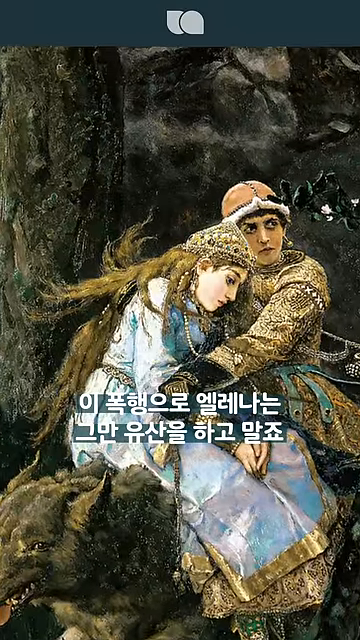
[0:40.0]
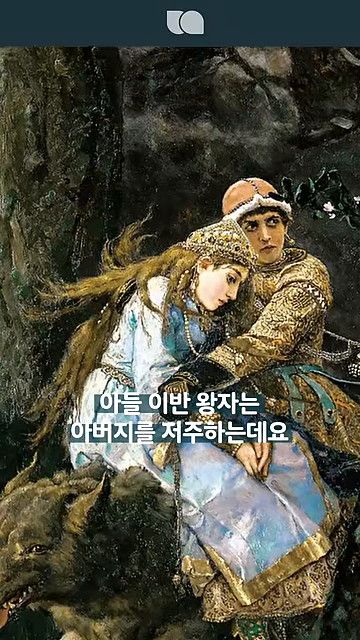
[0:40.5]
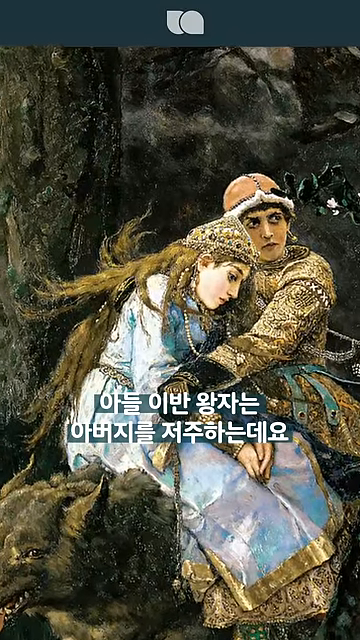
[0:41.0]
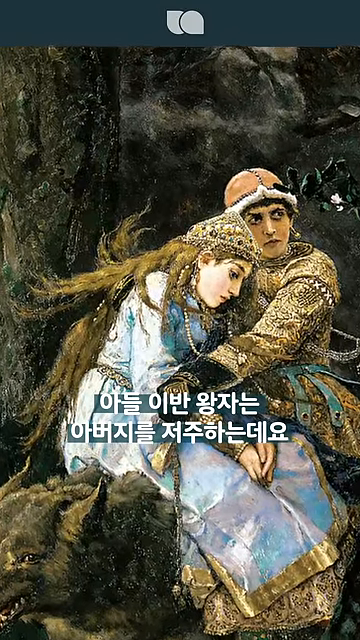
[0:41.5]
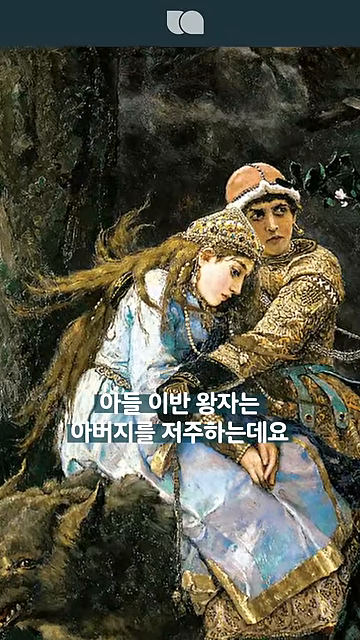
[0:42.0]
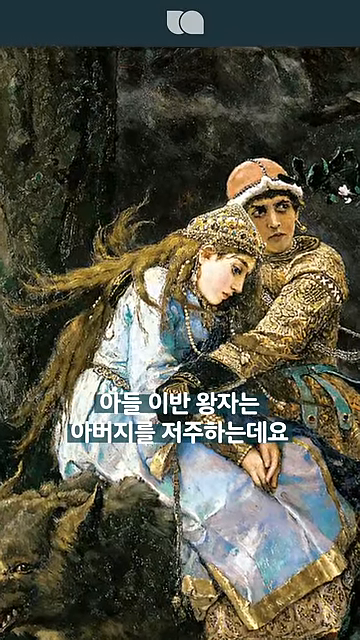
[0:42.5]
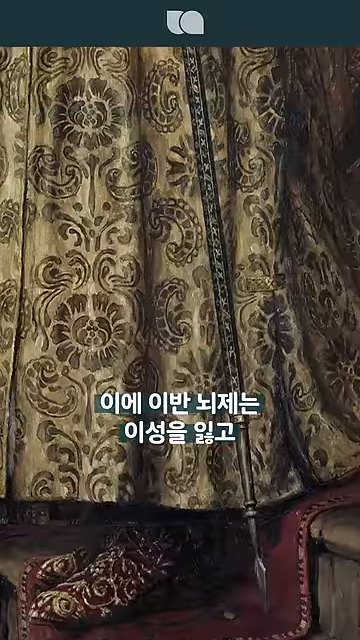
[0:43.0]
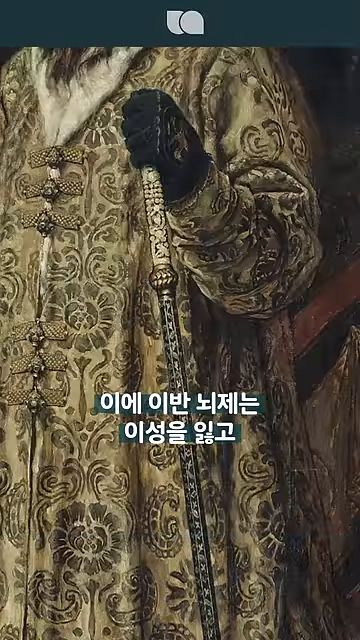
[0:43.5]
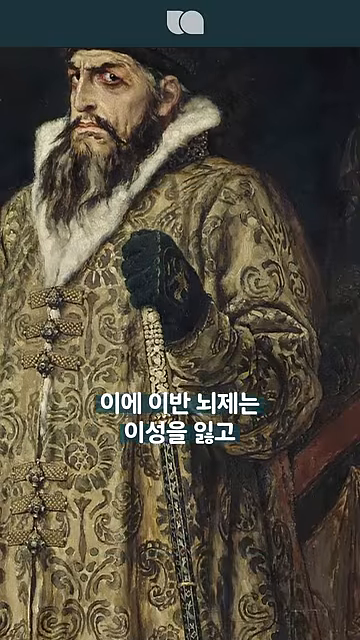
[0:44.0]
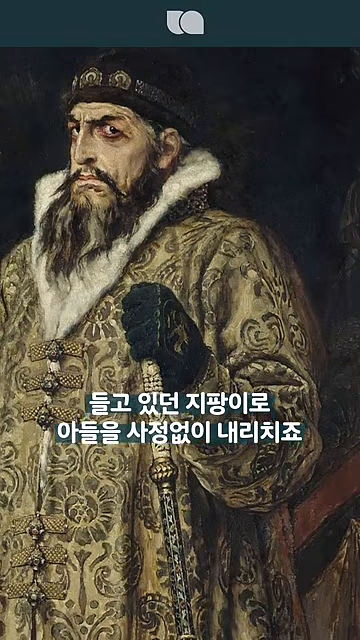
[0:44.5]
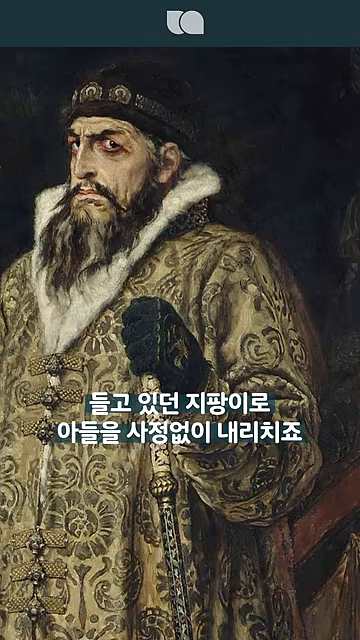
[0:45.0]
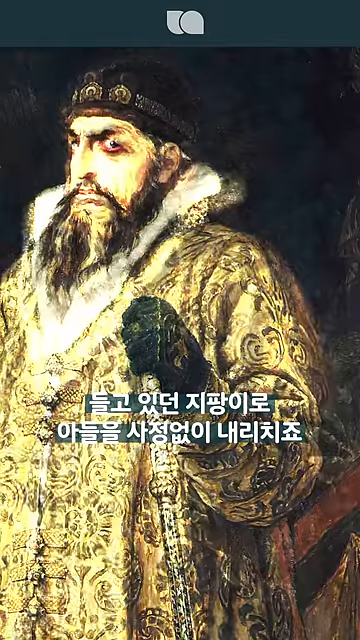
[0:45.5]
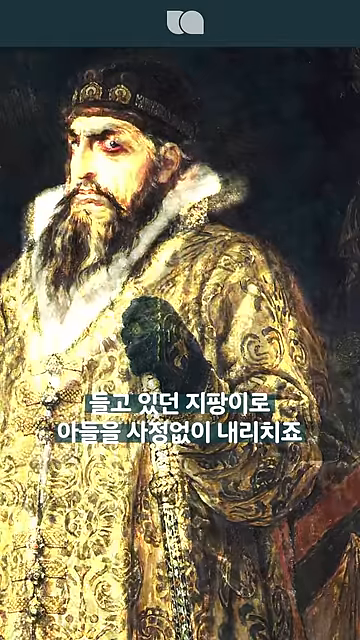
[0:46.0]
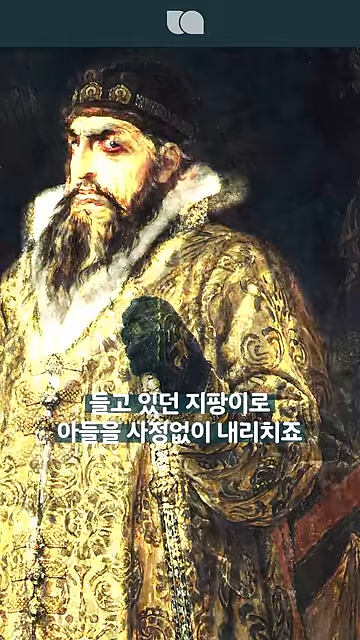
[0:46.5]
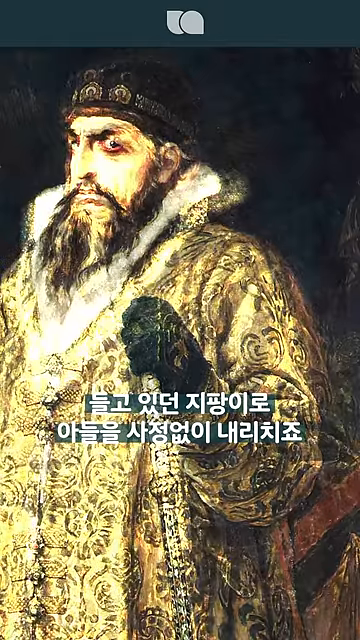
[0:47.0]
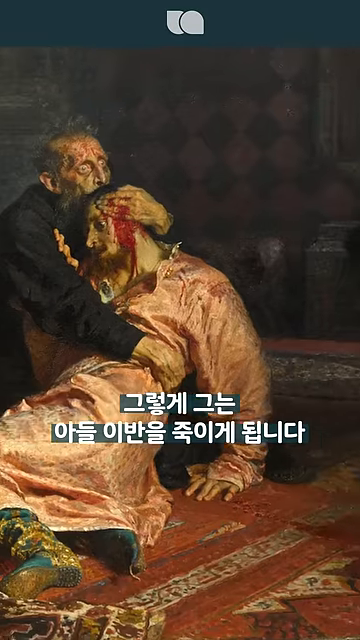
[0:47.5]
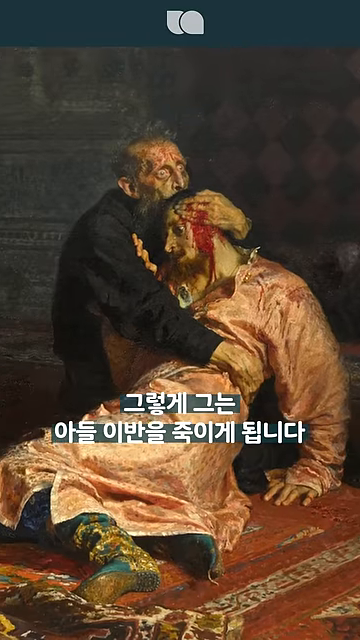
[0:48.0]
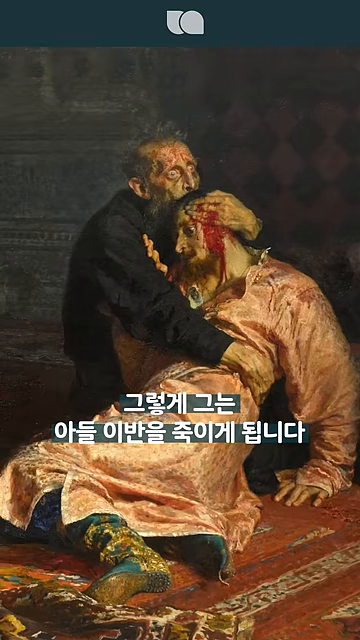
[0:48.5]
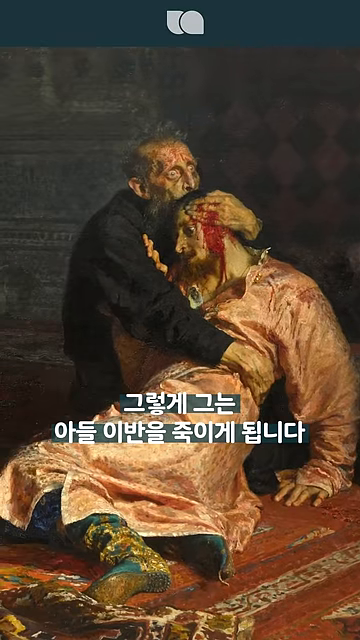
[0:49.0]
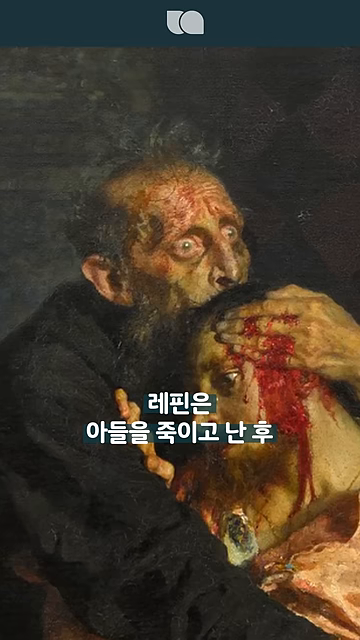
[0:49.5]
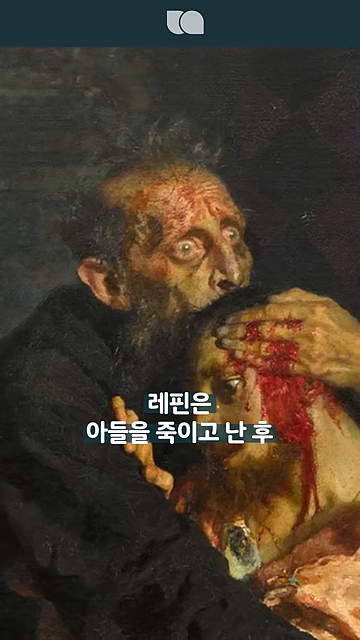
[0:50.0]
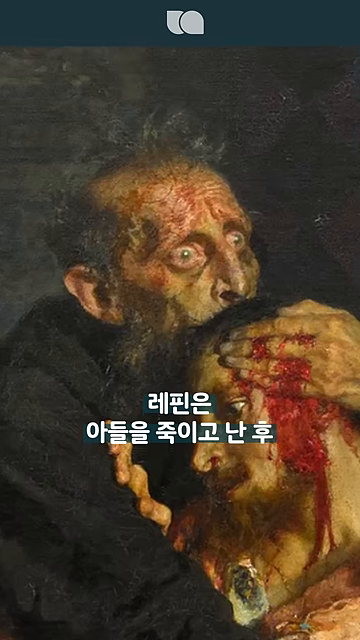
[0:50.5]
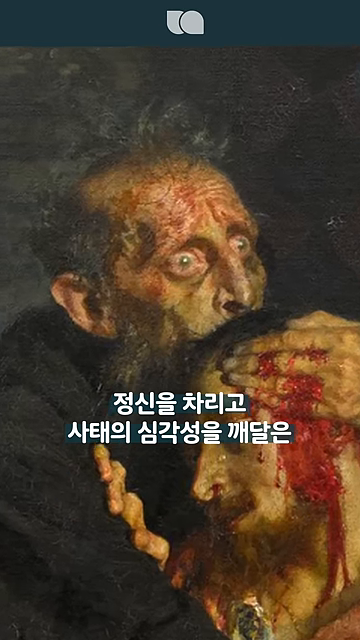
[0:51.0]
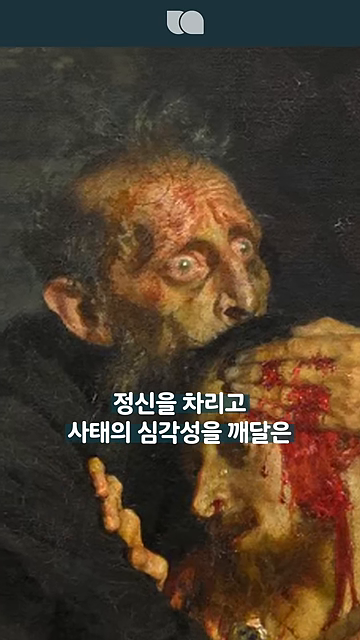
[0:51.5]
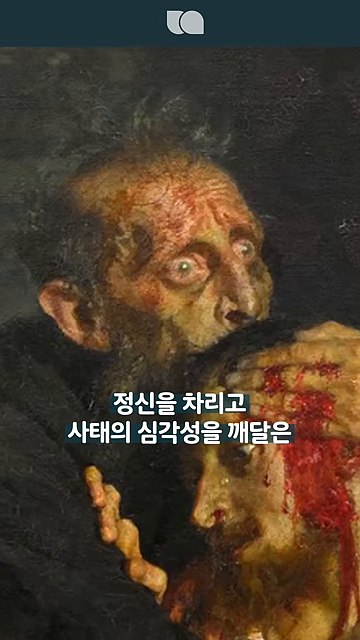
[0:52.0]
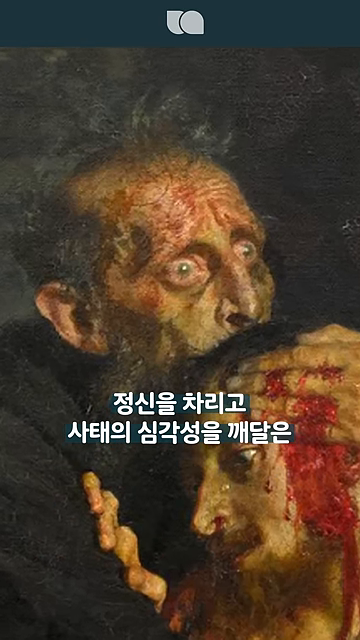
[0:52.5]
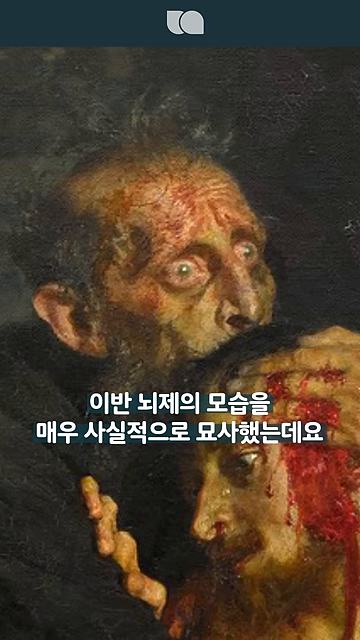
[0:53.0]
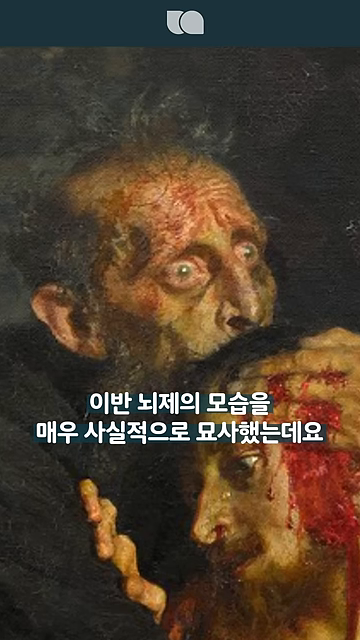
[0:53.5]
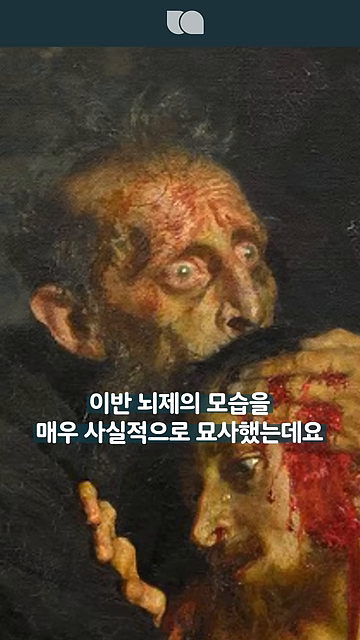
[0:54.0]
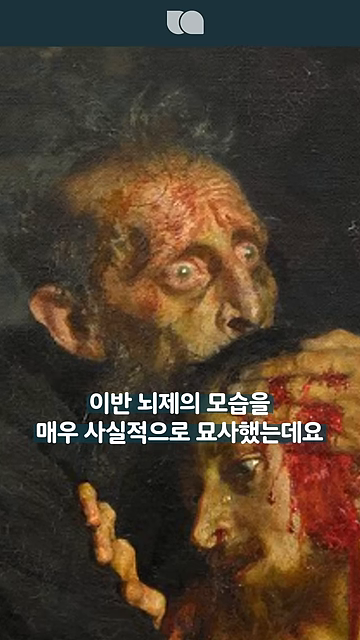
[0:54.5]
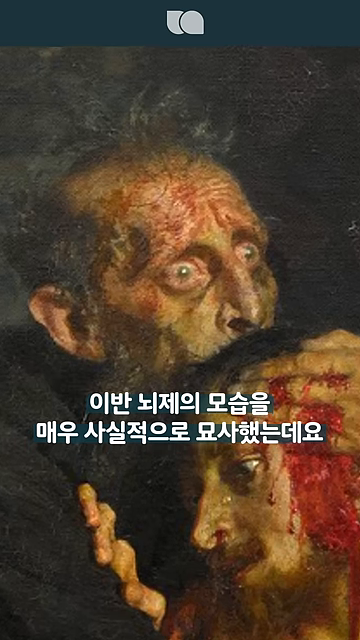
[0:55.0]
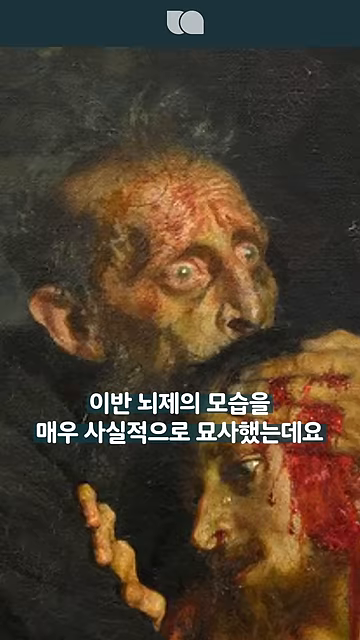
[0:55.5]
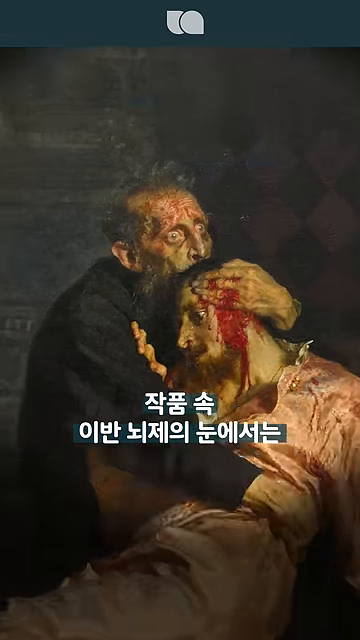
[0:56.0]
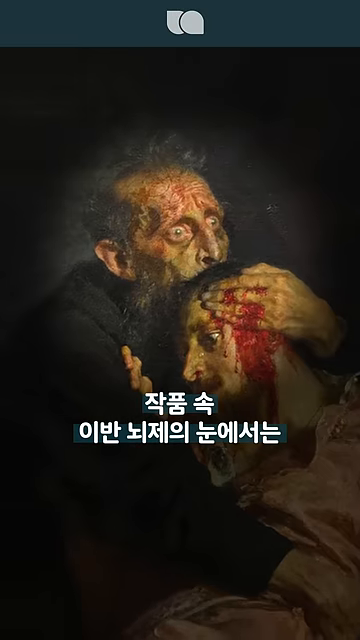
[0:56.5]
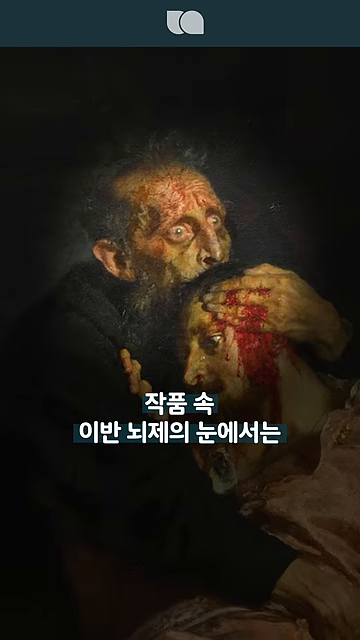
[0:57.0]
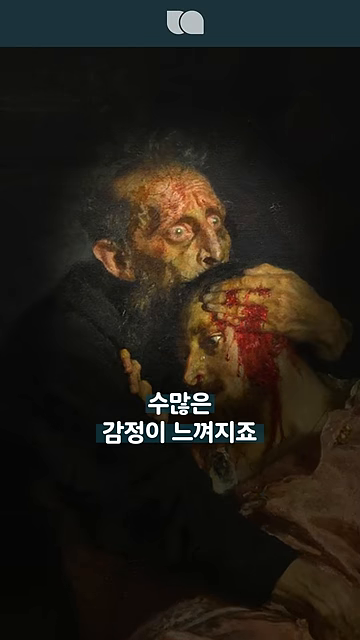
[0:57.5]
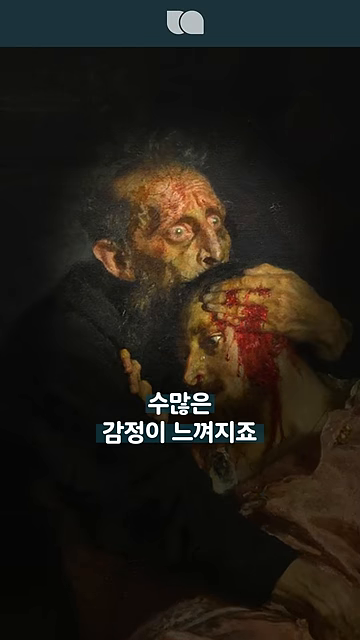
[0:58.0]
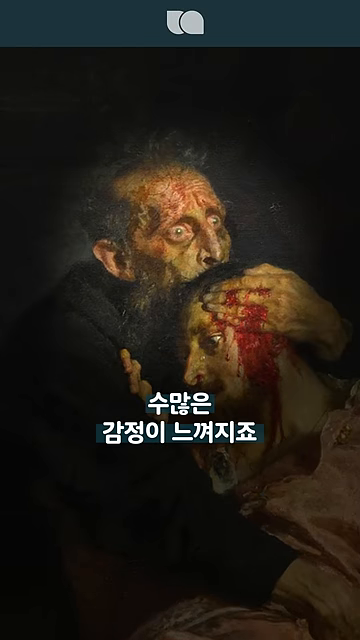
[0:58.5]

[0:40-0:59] A man holds a woman on a wolf's back, wearing very ornamental clothing. The video shifts to a very stern-looking man in the same ornamental clothing, but older, more refined and aged. It then shifts to a painting in which the older man has been shot in the side of the head, and another man holds him by the head and side, horrified, his eyes open. The man also has blood on his face. A silhouette appears around the man holding the deceased man, possibly marking him as important to the picture or as someone who may have committed the crime.